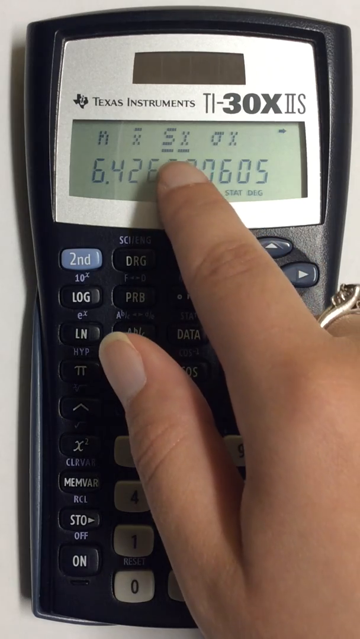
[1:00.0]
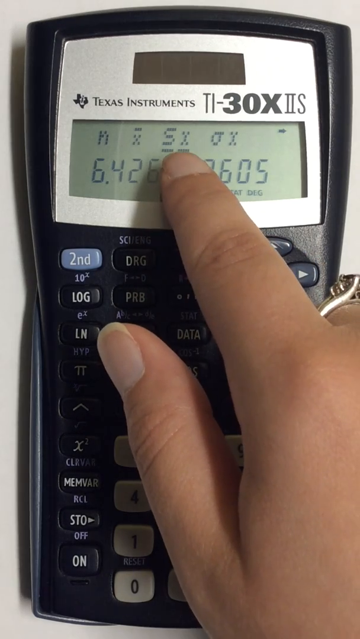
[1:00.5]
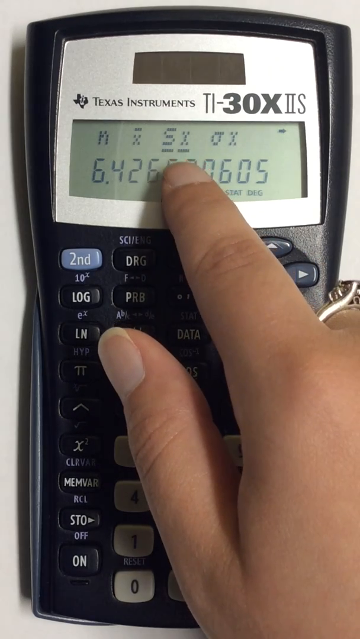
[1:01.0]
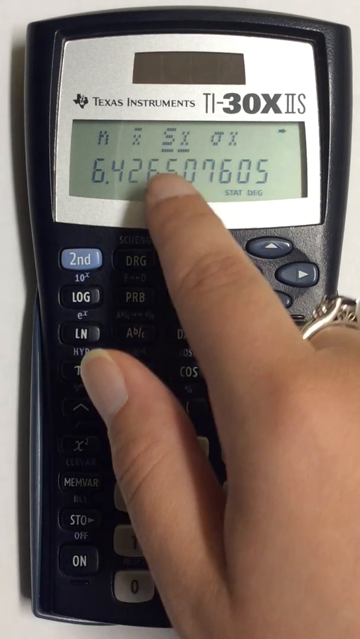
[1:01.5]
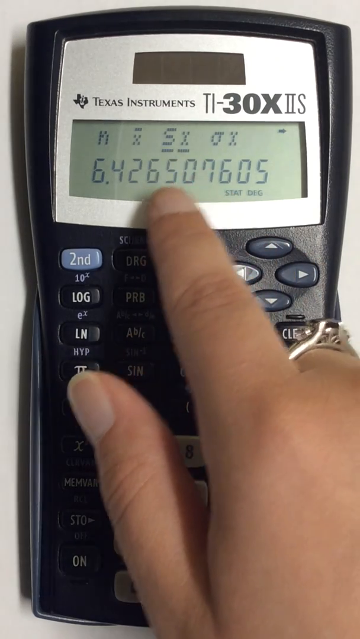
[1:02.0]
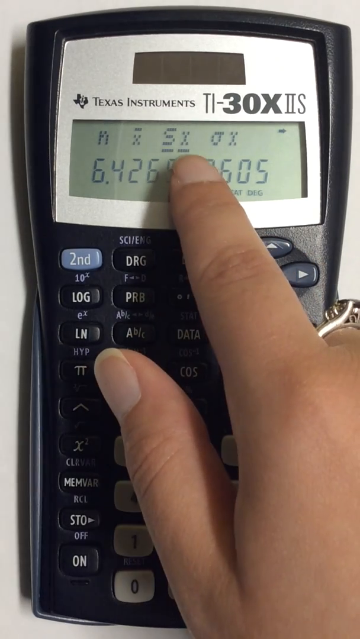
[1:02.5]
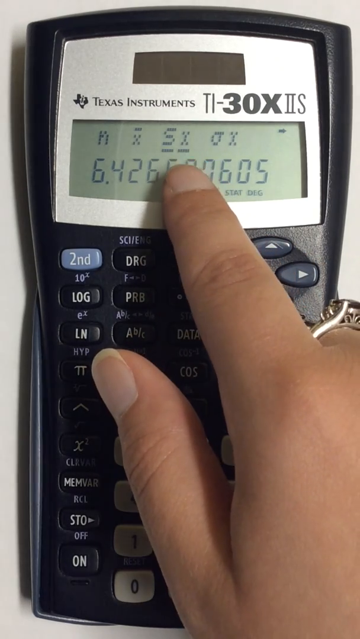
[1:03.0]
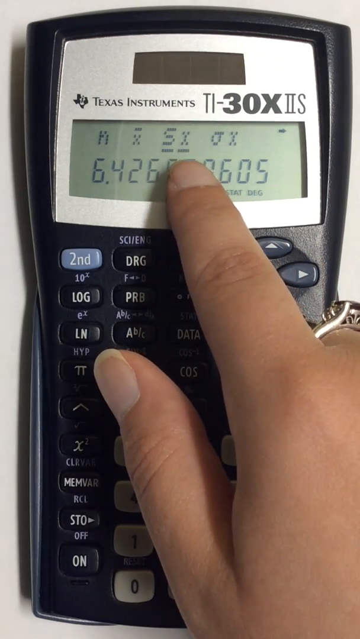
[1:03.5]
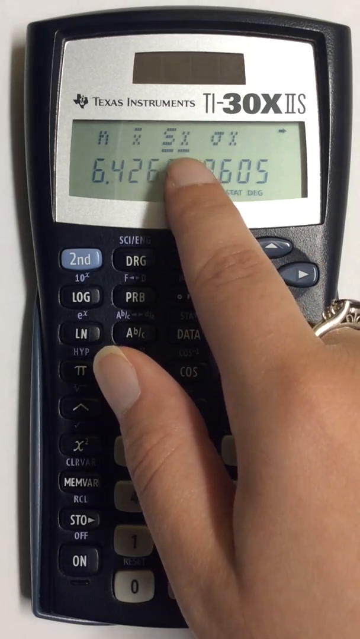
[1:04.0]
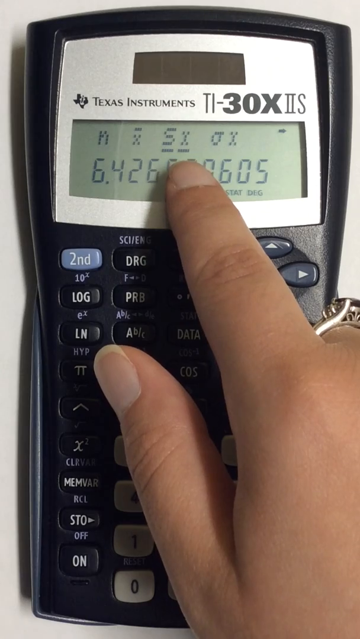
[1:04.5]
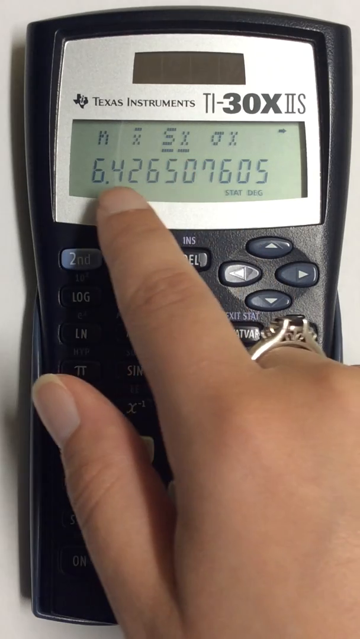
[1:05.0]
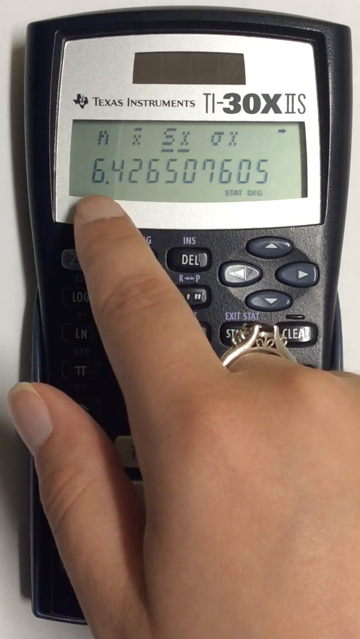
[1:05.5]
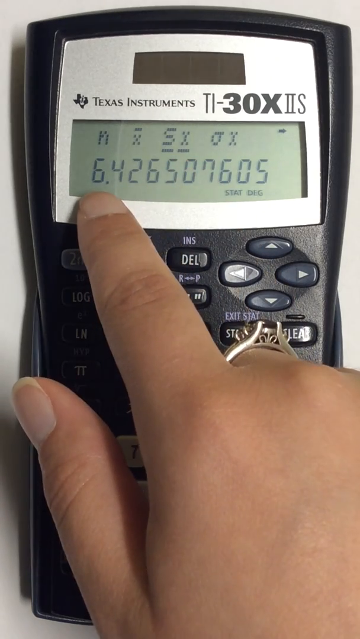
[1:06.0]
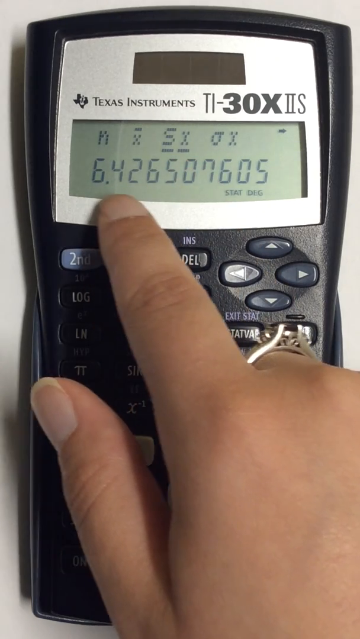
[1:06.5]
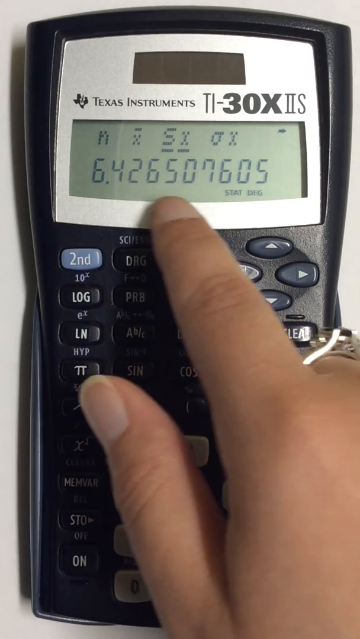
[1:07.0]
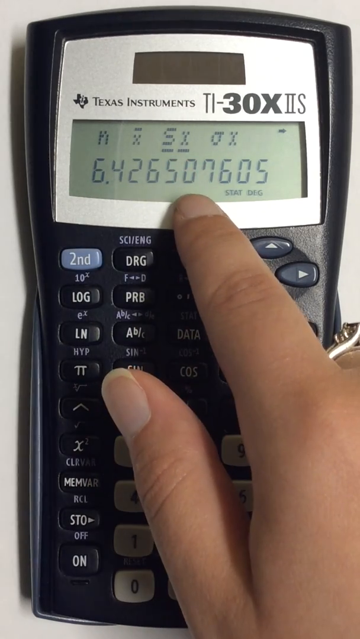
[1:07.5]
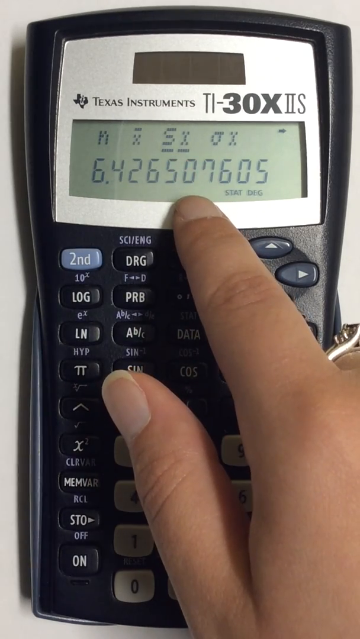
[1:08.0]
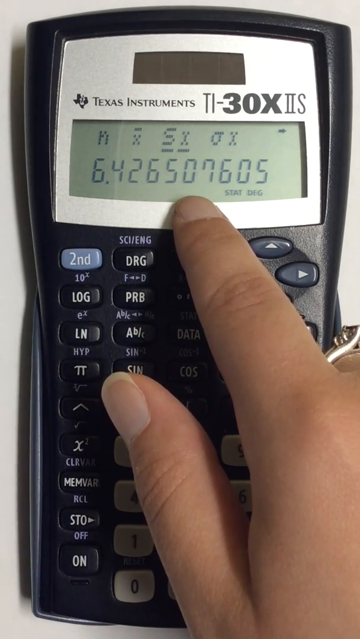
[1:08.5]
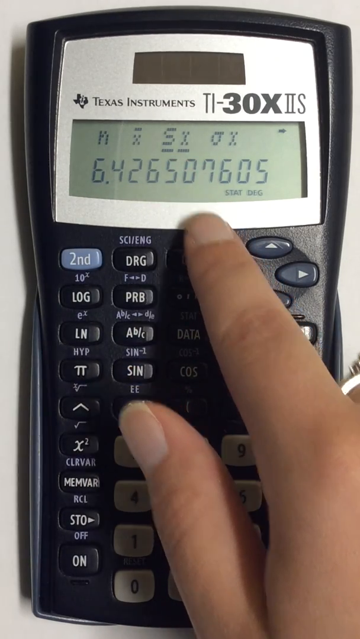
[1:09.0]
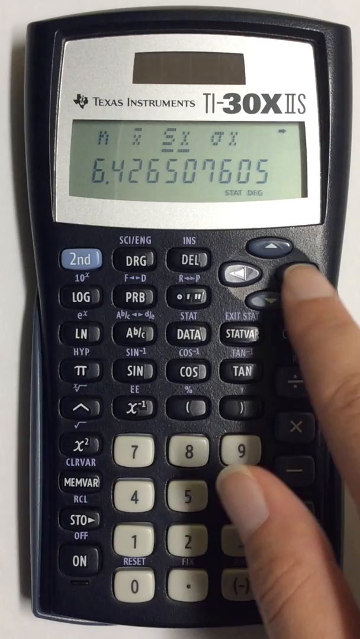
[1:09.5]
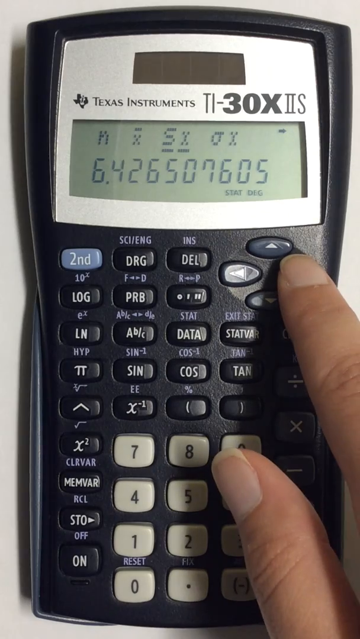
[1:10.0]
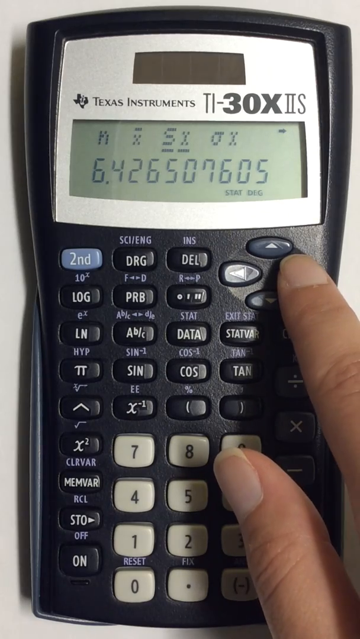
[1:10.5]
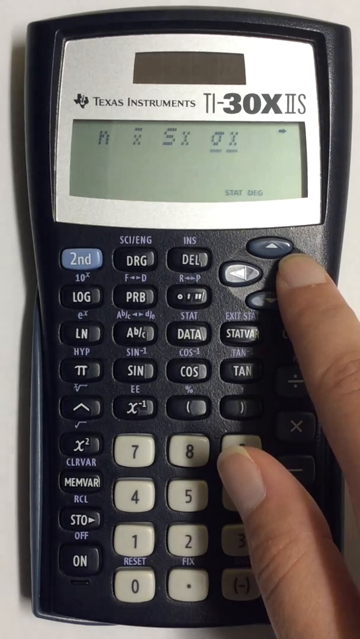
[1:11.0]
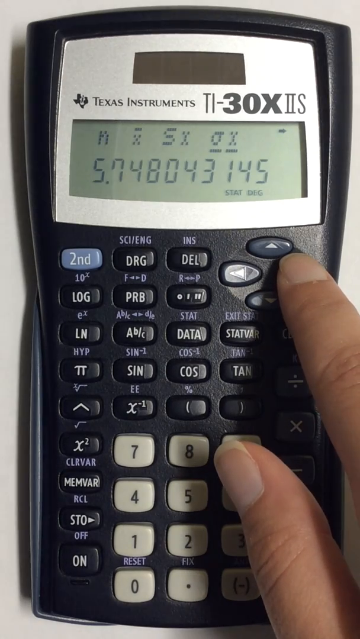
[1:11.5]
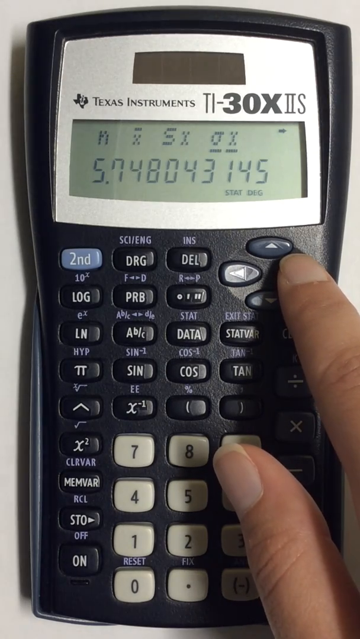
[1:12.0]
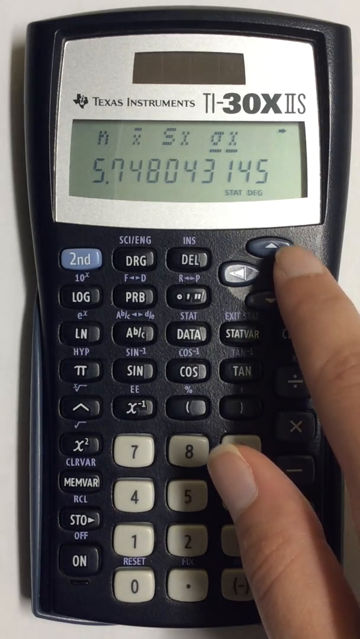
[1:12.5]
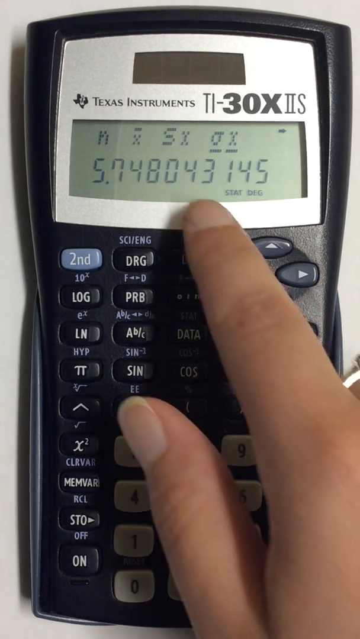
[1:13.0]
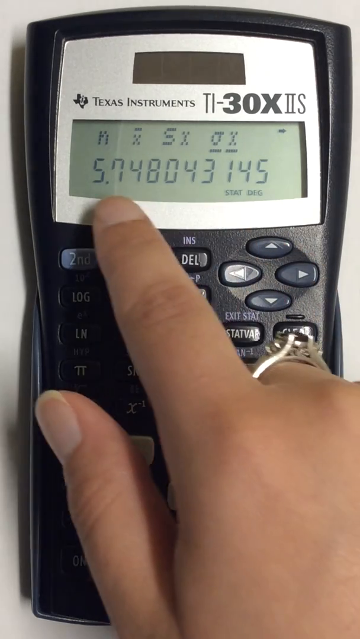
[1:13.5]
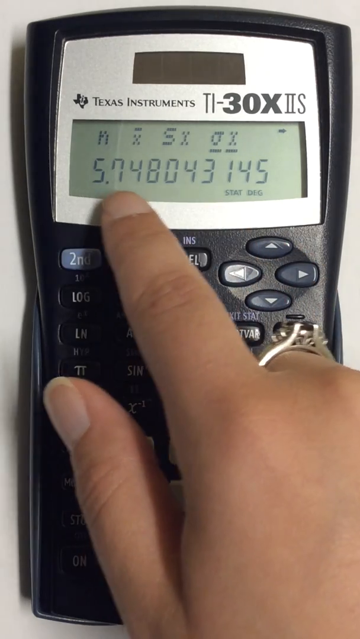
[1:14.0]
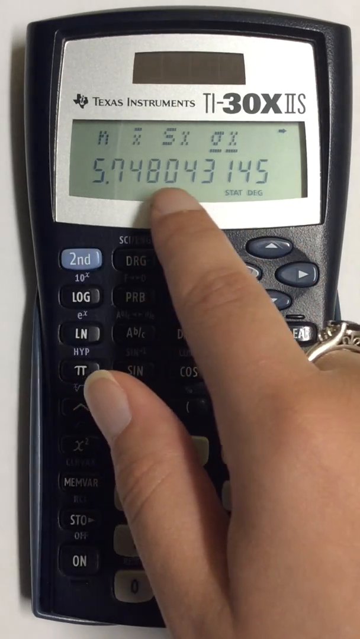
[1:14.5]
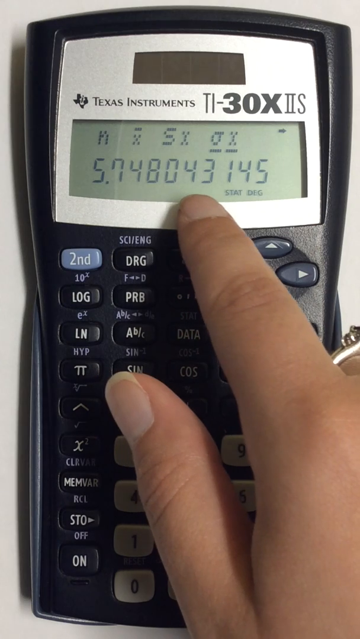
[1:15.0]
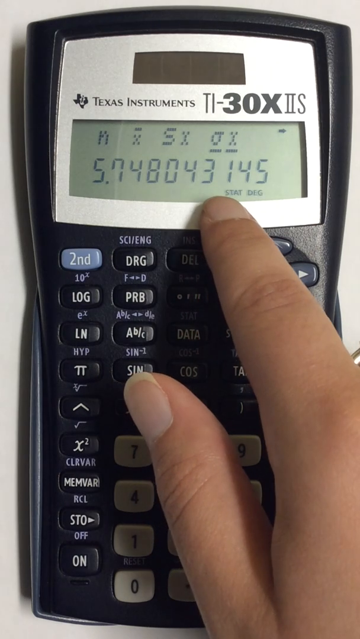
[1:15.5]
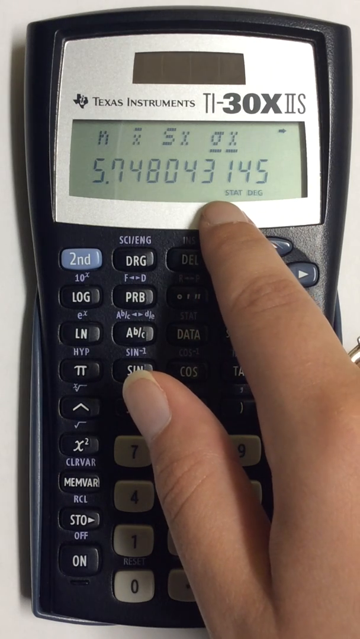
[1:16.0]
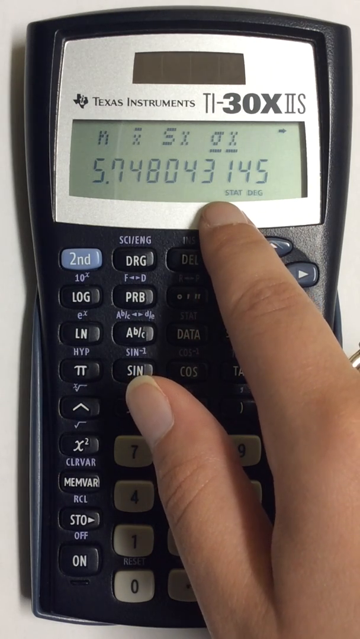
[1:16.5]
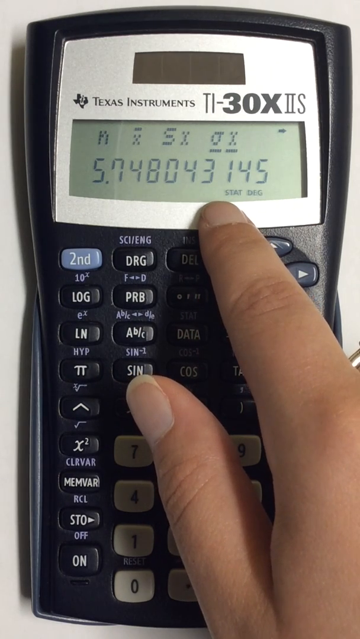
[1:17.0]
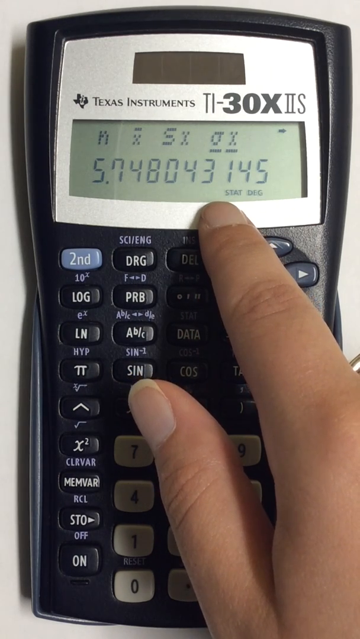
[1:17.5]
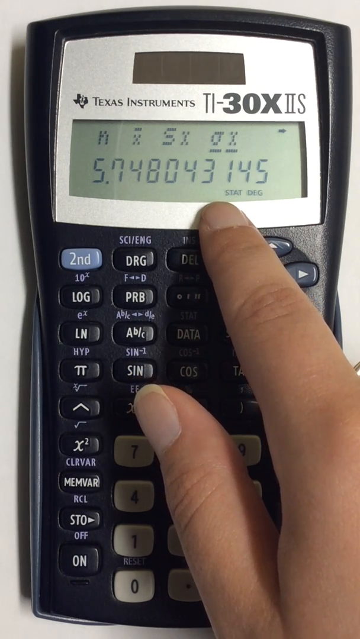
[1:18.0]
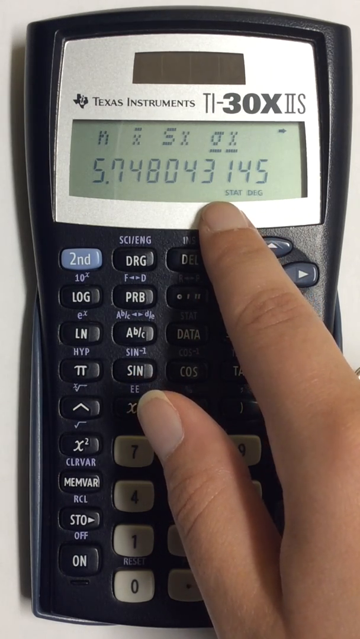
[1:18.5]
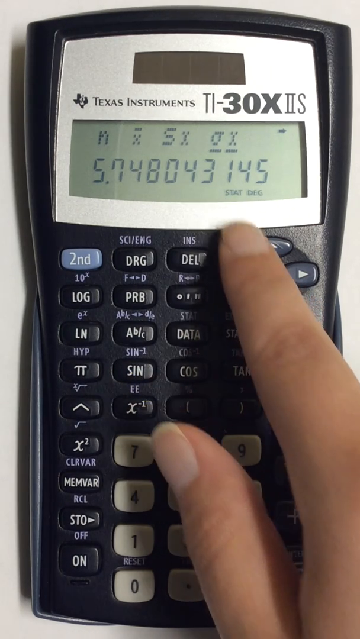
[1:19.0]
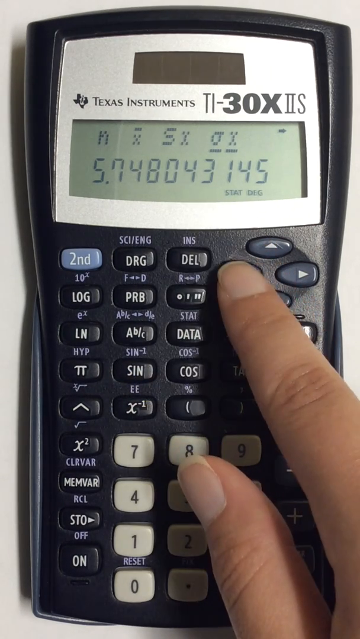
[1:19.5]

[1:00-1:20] A hand wearing a wedding ring points to the display screen of a blue and silver Texas Instruments 30X2 calculator. There are dark blue buttons, a light blue button that says "second", and gray buttons with black text including 0, 1 and 4. The person points to the screen, which shows "SX" and the number 6.426 0605. They continue to kind of hover over the screen, and the full number 6.426507605 is visible on the display. They then move down and push the right arrow button, bringing up 5.748043145. The person keeps pointing at the numbers on the display and then points to the left arrow button.